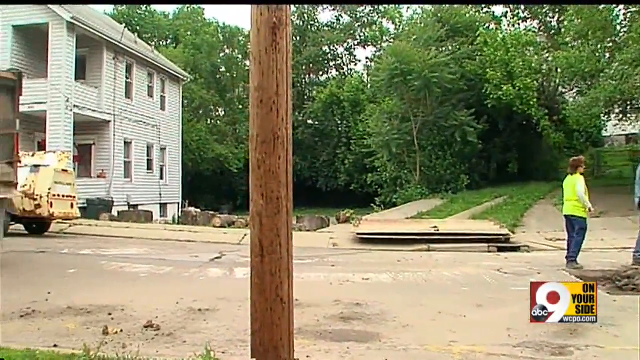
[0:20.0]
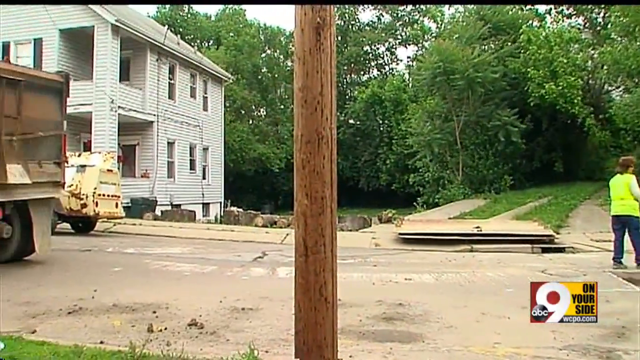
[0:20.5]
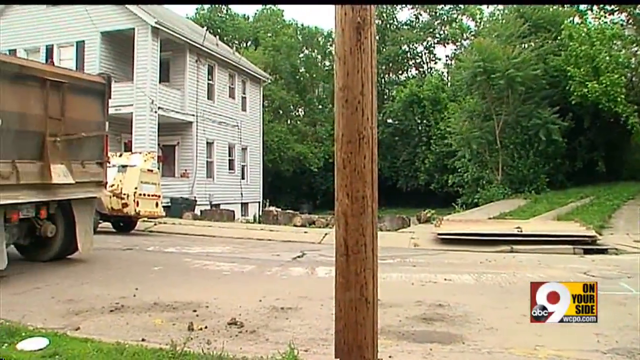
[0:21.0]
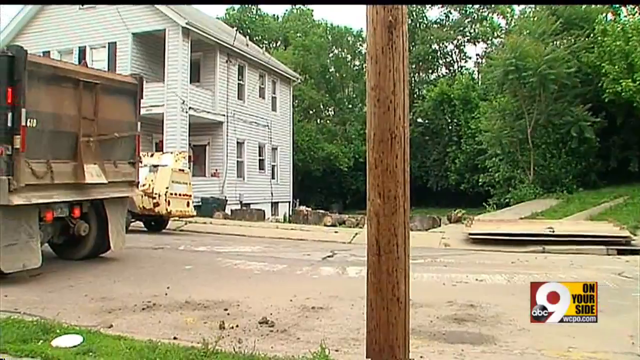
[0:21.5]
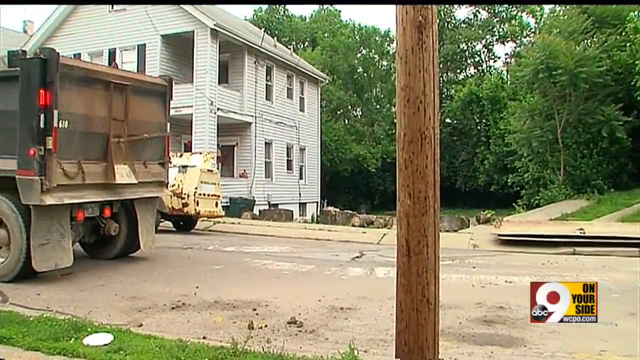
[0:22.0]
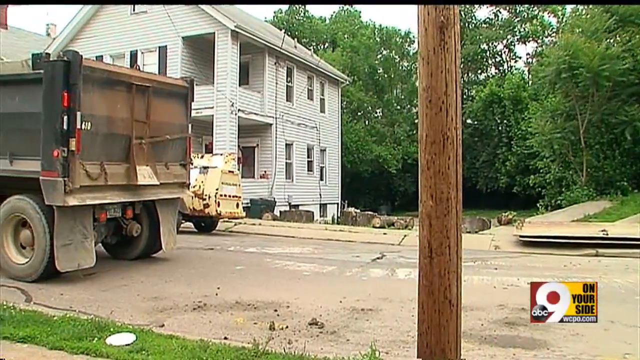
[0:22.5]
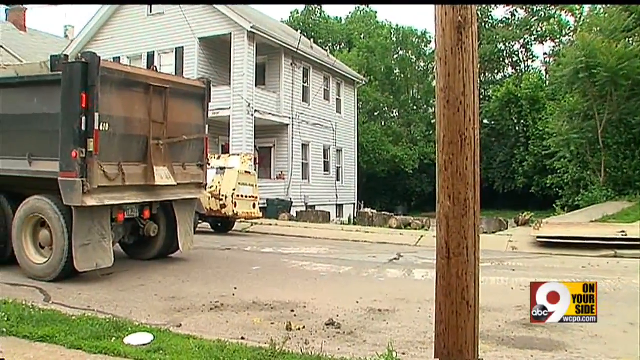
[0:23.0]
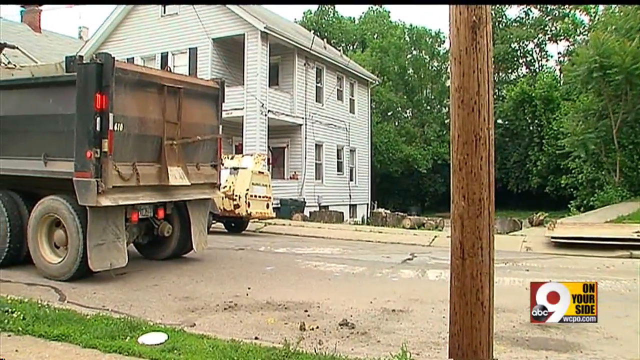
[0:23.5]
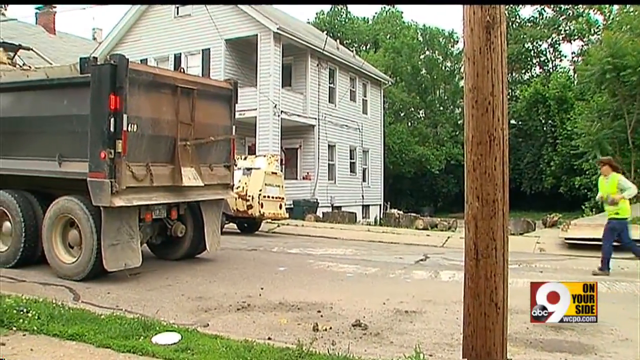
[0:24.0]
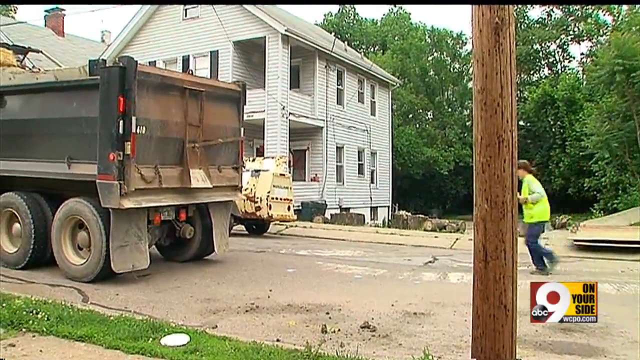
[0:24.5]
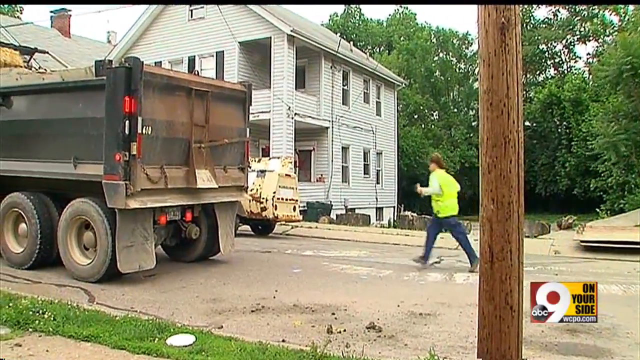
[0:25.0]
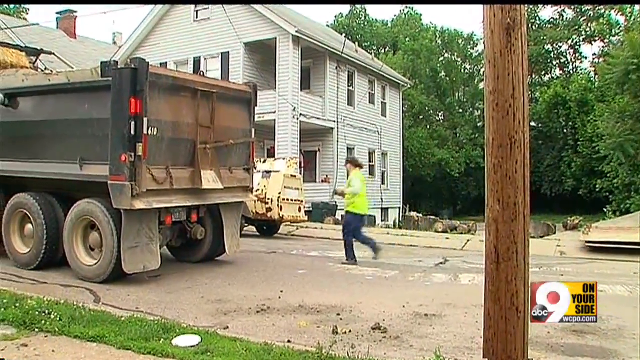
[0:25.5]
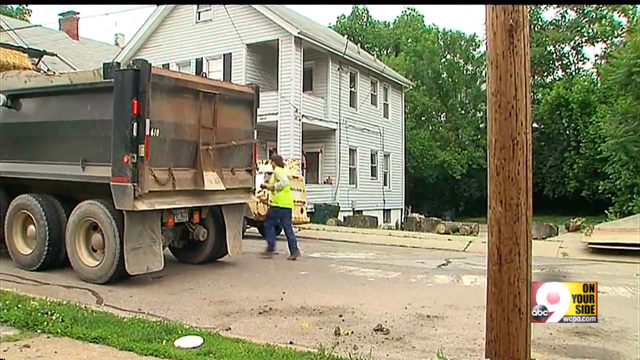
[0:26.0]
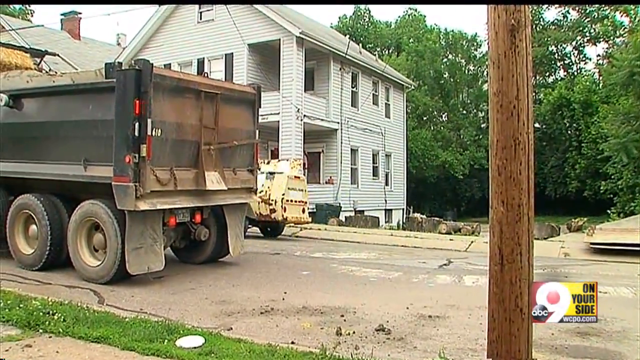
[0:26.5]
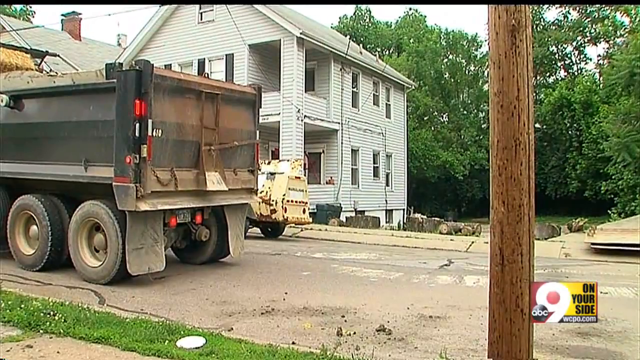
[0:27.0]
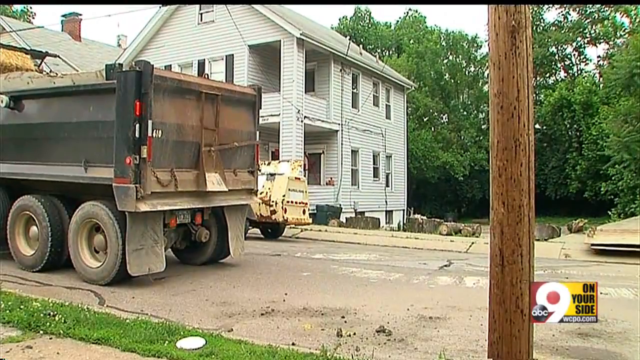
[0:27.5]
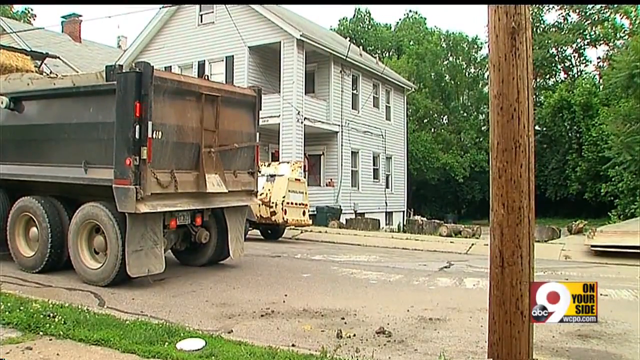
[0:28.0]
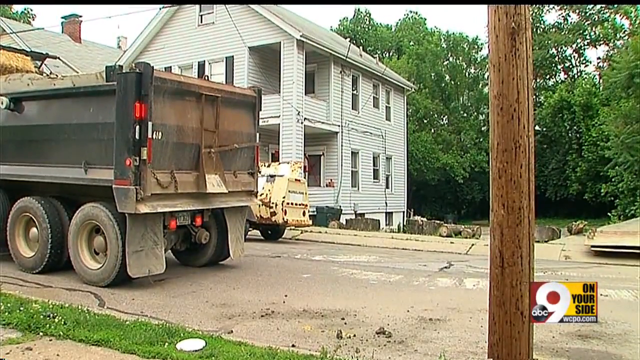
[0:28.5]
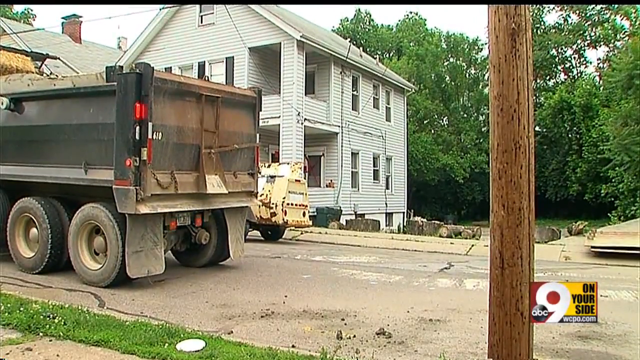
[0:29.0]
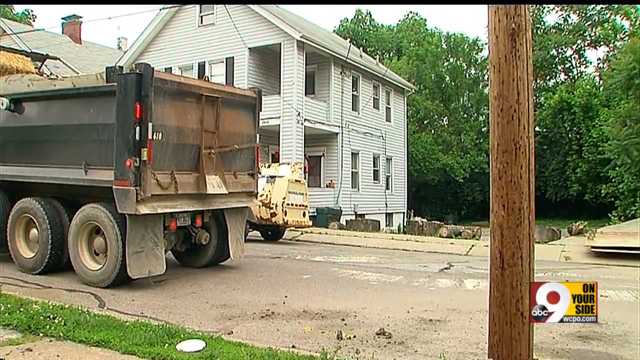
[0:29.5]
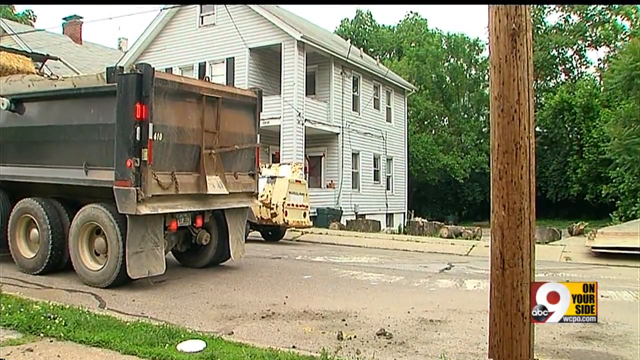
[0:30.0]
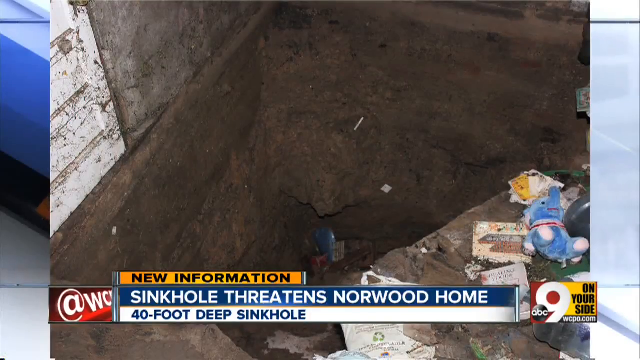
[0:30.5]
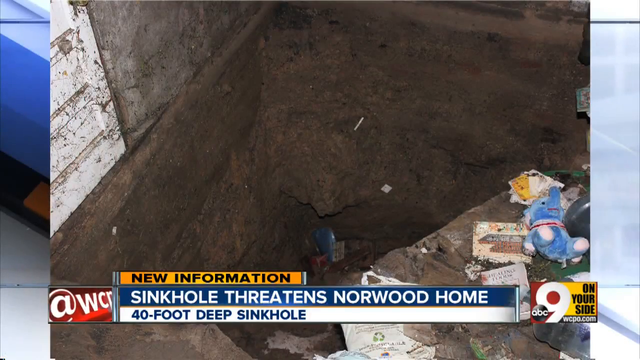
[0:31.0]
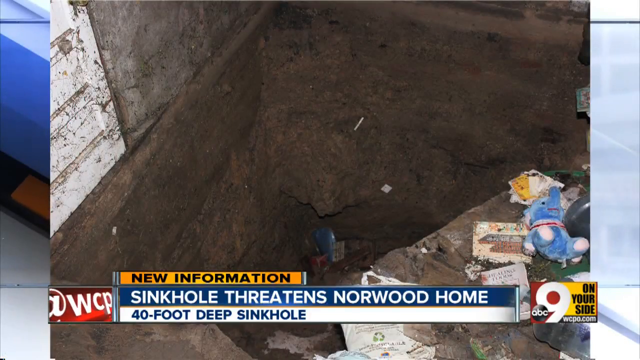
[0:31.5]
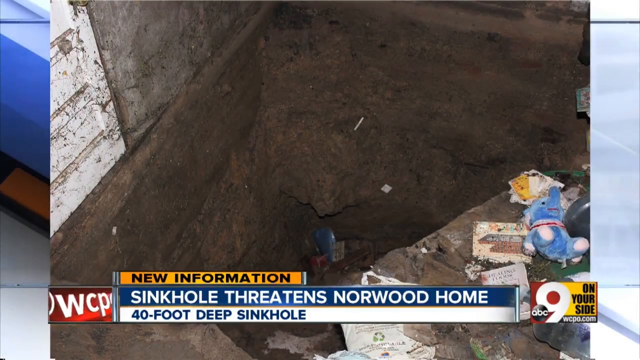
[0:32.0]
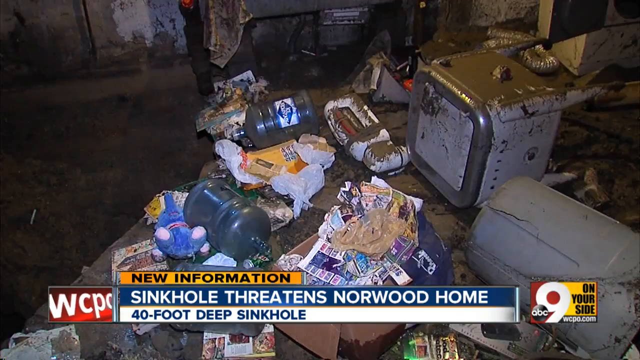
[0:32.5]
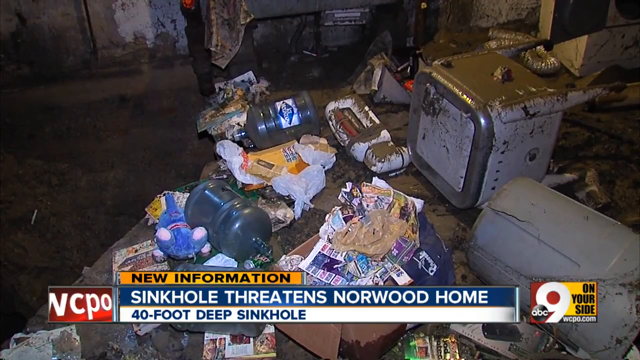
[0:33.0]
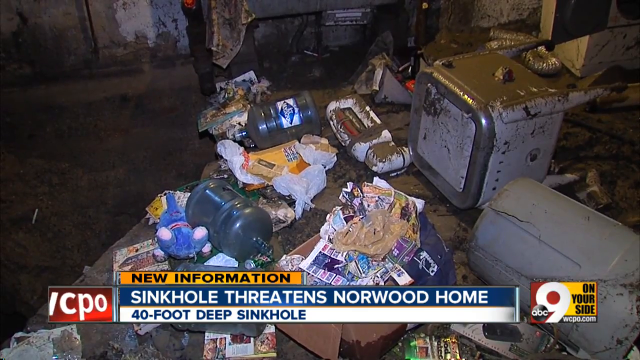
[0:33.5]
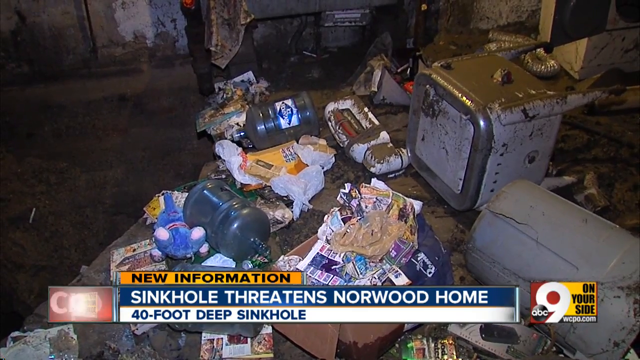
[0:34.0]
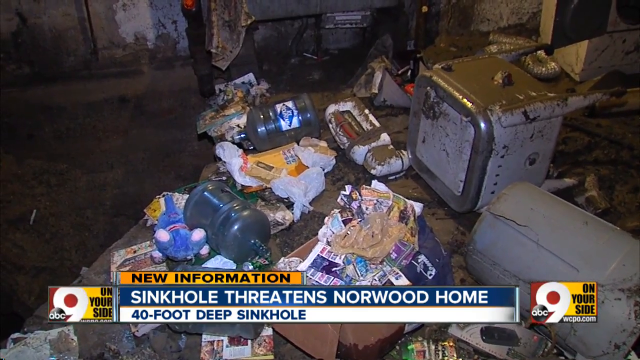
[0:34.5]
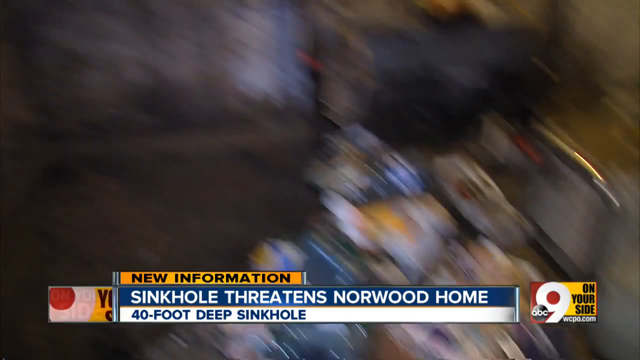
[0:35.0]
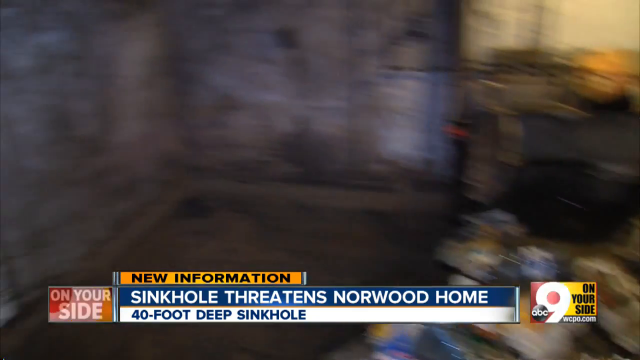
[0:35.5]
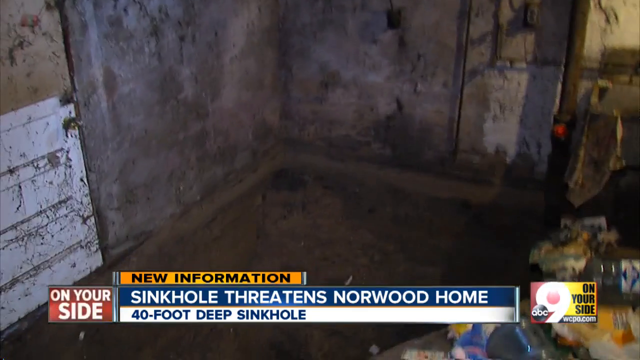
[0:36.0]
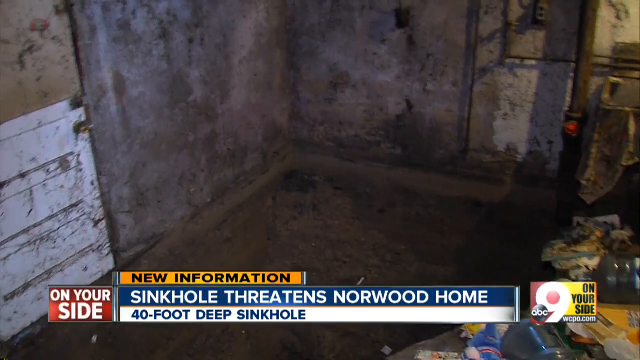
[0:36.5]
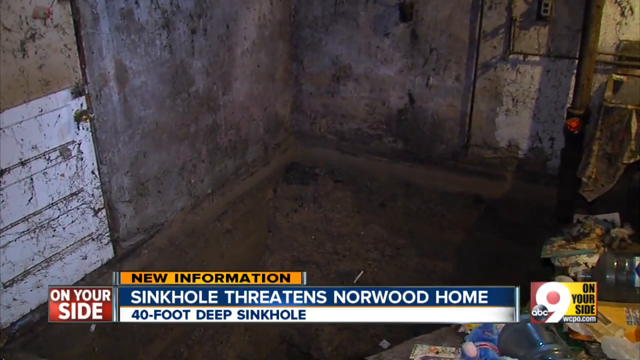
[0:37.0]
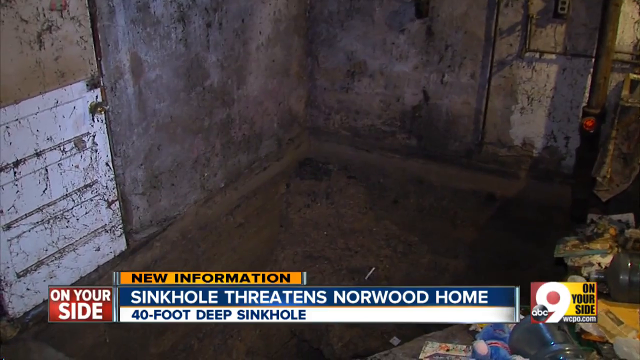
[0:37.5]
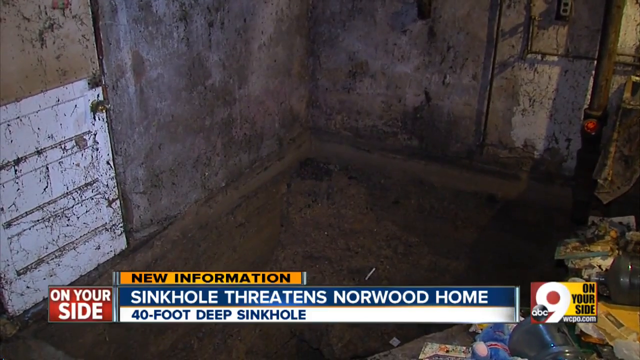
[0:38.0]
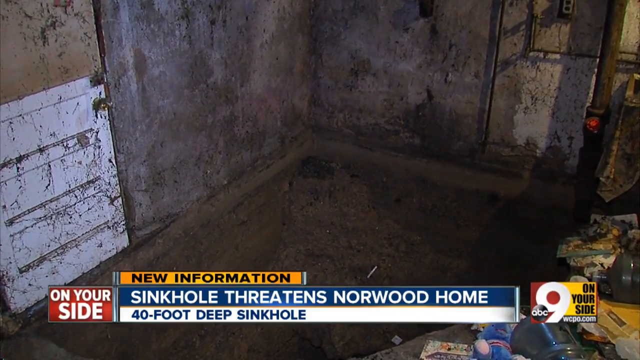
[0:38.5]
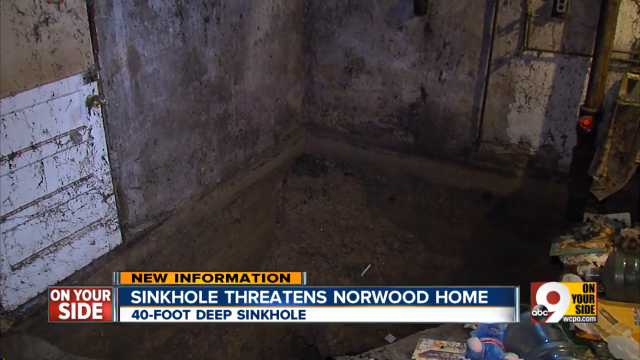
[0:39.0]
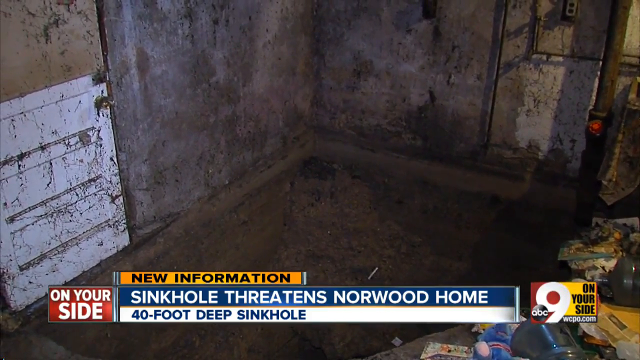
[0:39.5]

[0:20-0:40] On the neighborhood street where the sinkhole has opened up, there are older homes, seemingly 60 or more years old, and people working in the street. The sinkhole is probably 10 to 30 feet long and is a perfect rectangle, apparently already worked on, perhaps patched or dug out to keep it from getting bigger. Construction workers are around it, including two men in hard hats, one of whom is standing in the hole. A man who might be a bystander is on his phone, and a woman in a green vest stands with her hand on her hip; she possibly is someone of authority. The camera pans left to other homes on the street and a dump truck parked there, and the woman runs toward the dump truck and past it. The camera then pans back to the studio, where another shot of the sinkhole is shown.